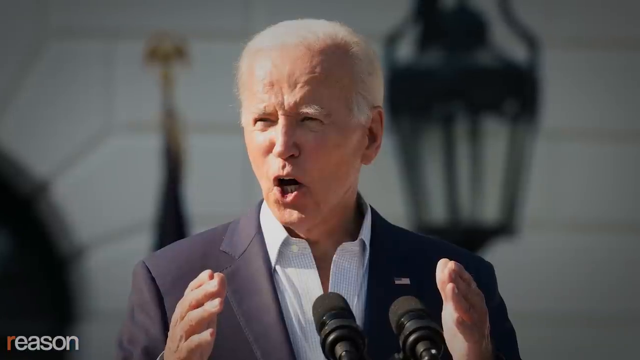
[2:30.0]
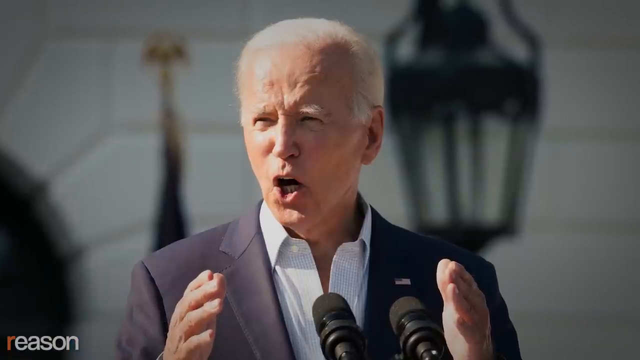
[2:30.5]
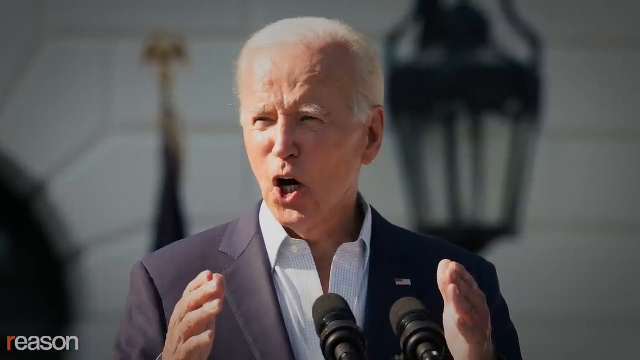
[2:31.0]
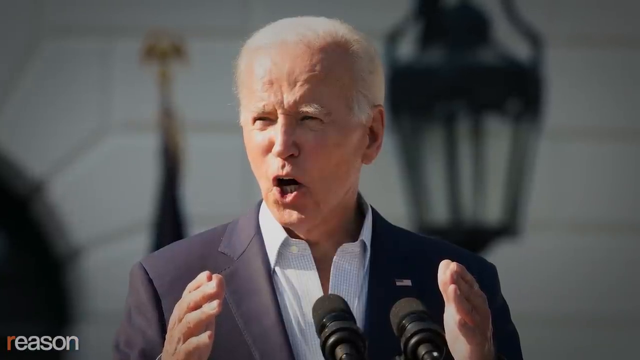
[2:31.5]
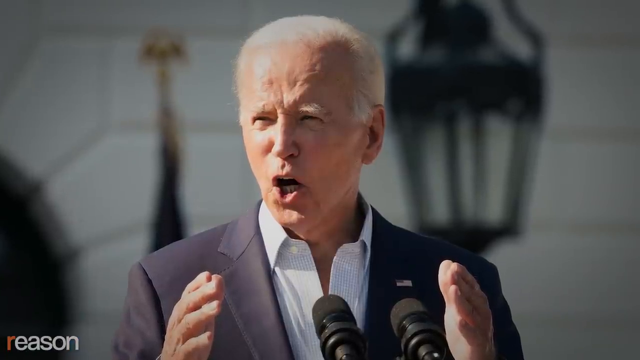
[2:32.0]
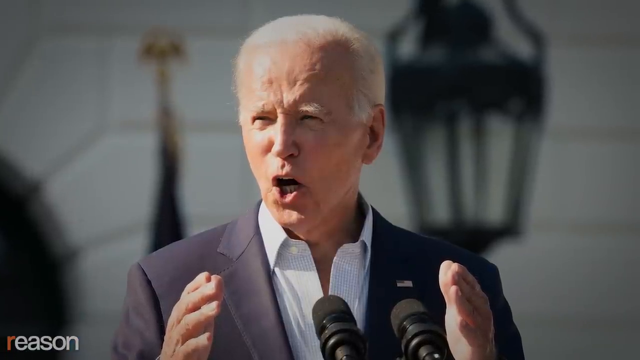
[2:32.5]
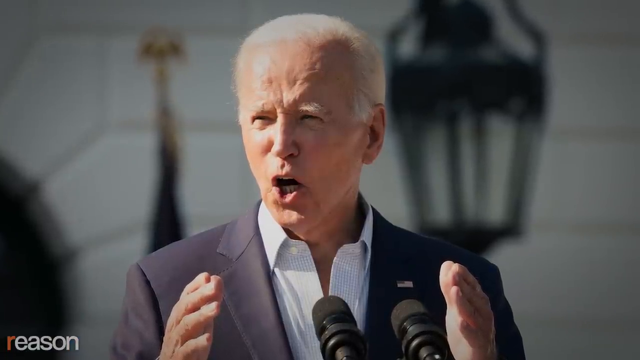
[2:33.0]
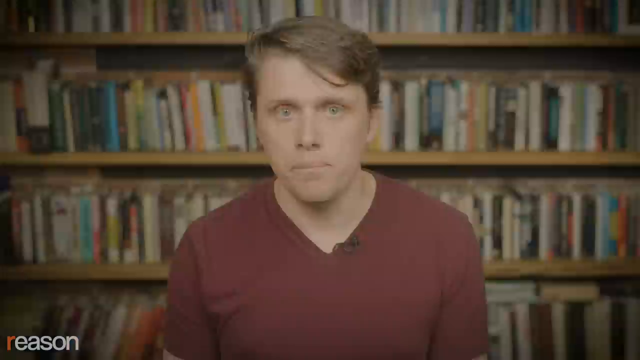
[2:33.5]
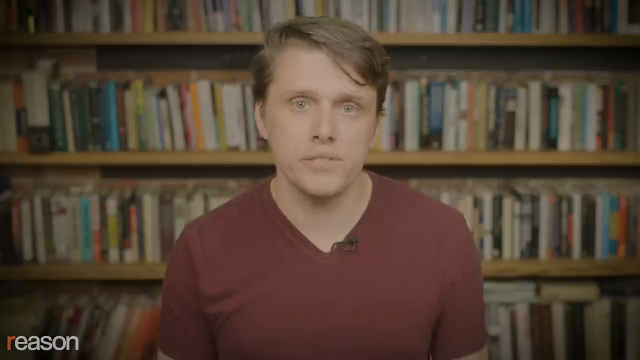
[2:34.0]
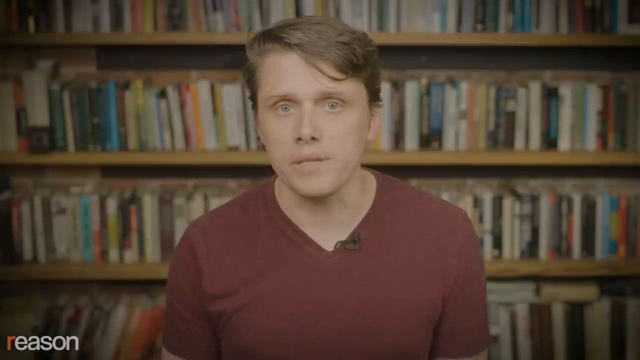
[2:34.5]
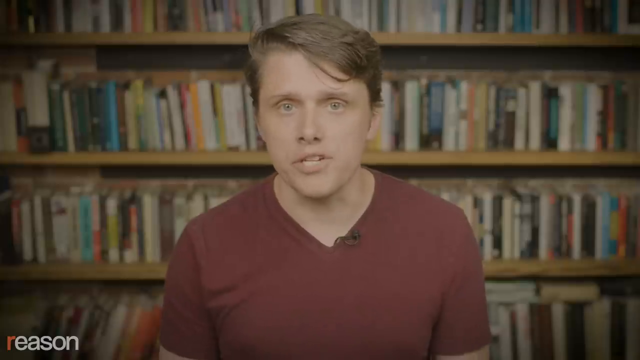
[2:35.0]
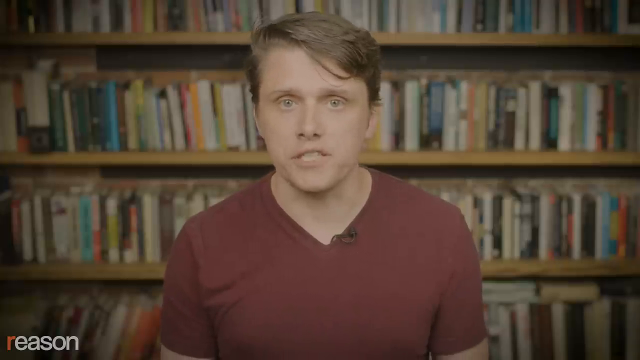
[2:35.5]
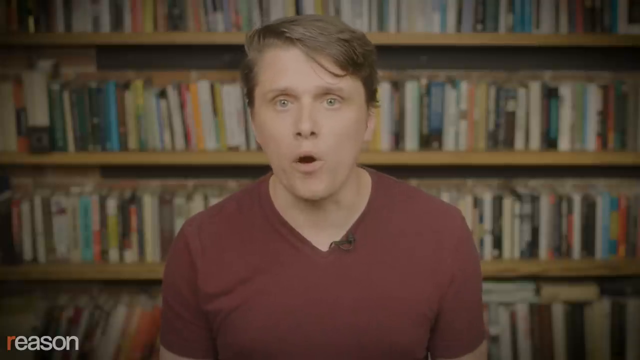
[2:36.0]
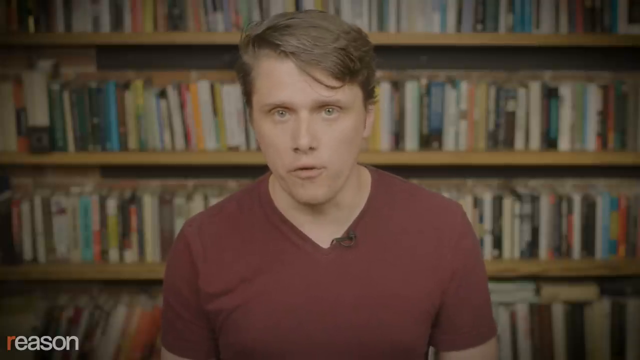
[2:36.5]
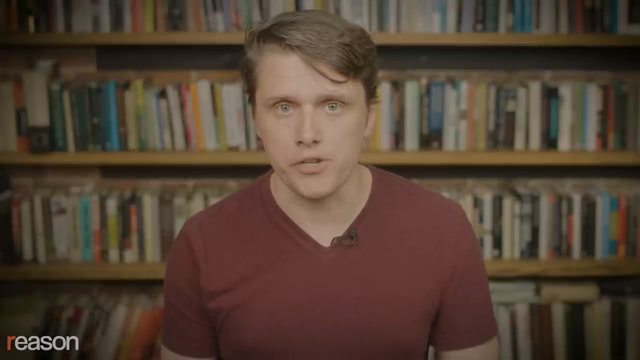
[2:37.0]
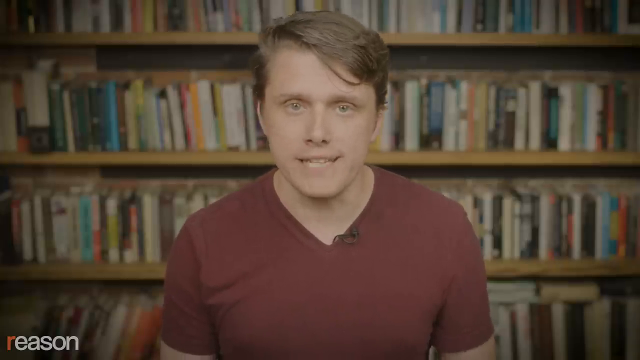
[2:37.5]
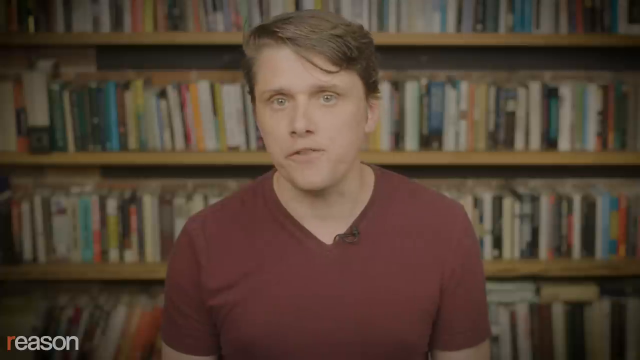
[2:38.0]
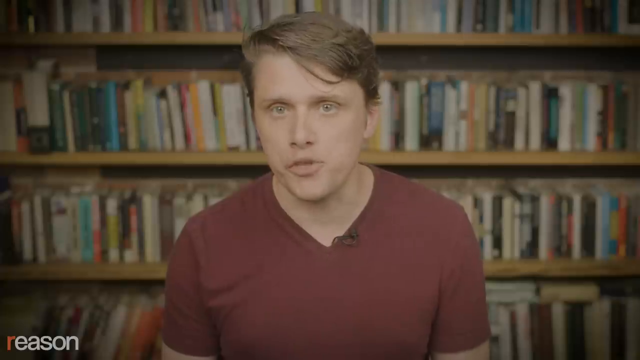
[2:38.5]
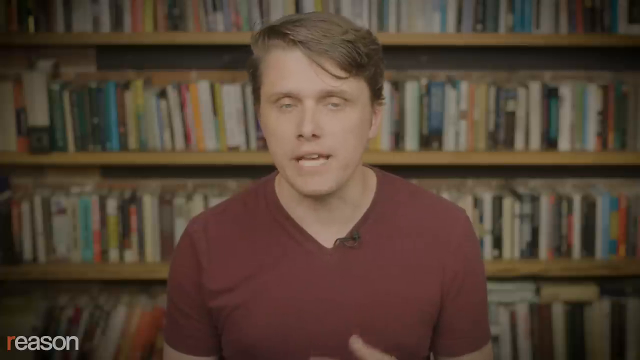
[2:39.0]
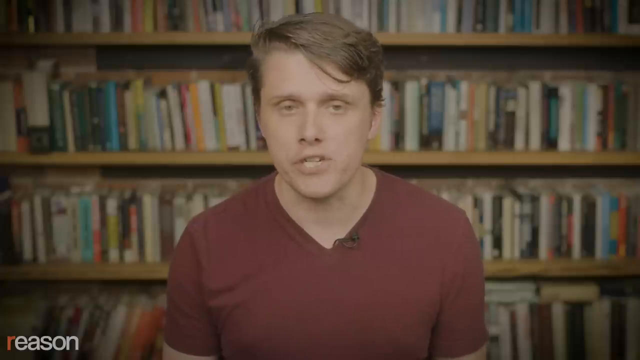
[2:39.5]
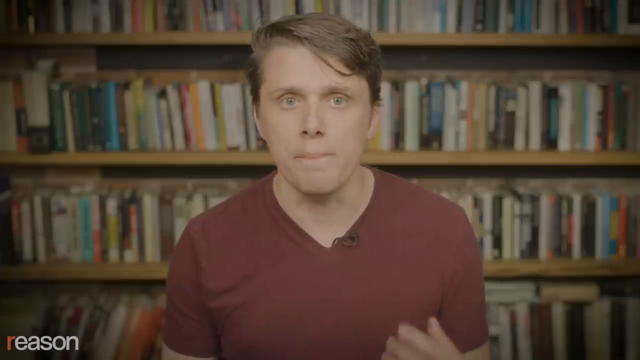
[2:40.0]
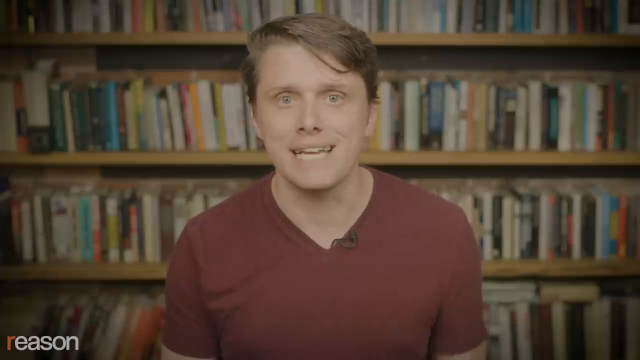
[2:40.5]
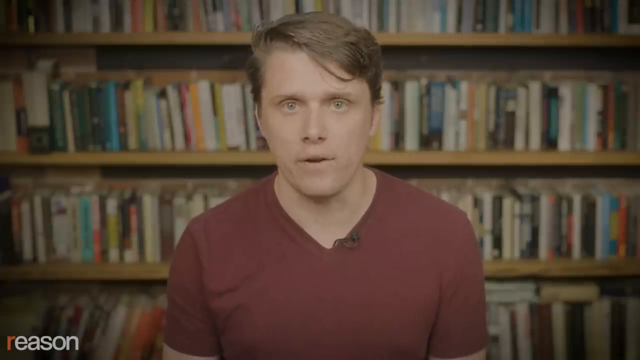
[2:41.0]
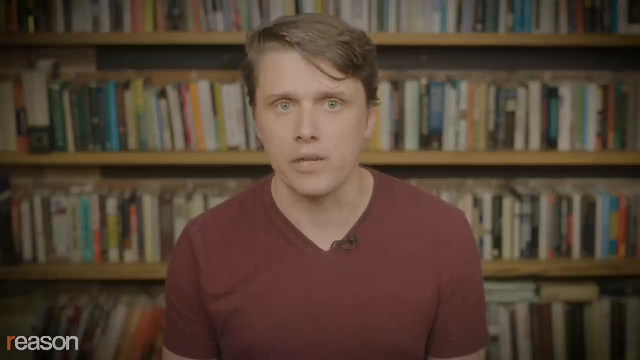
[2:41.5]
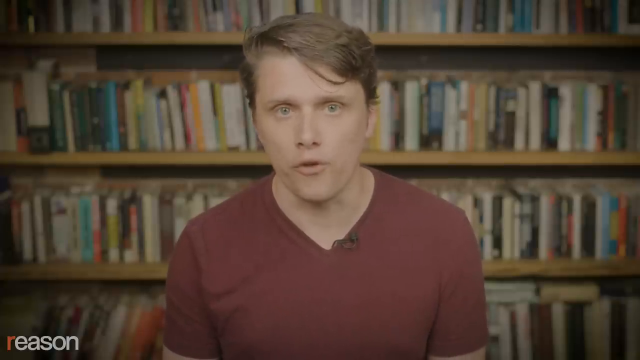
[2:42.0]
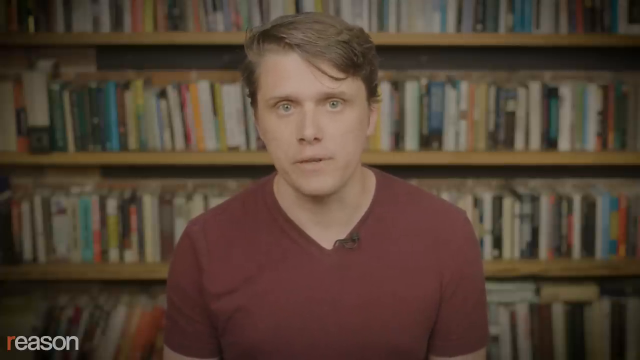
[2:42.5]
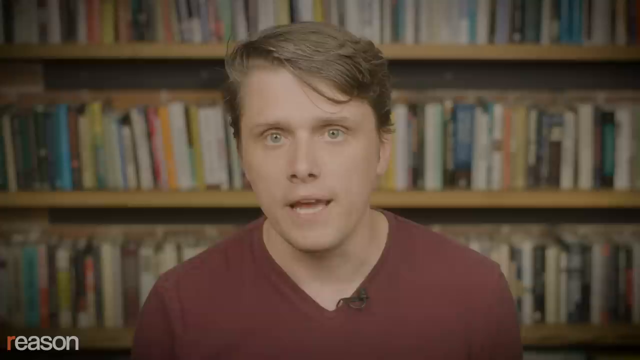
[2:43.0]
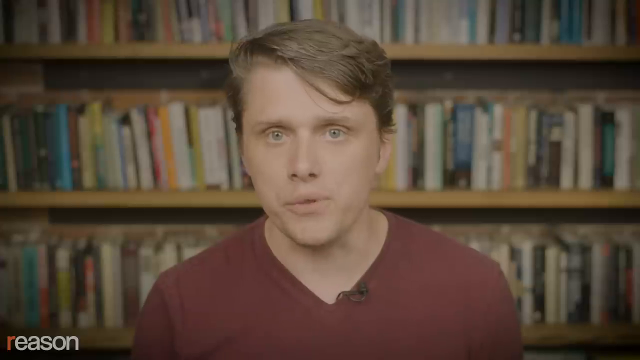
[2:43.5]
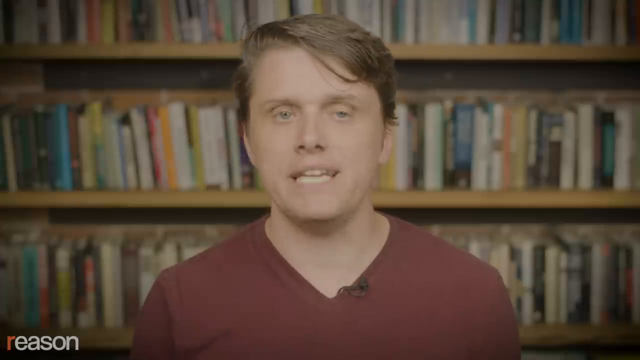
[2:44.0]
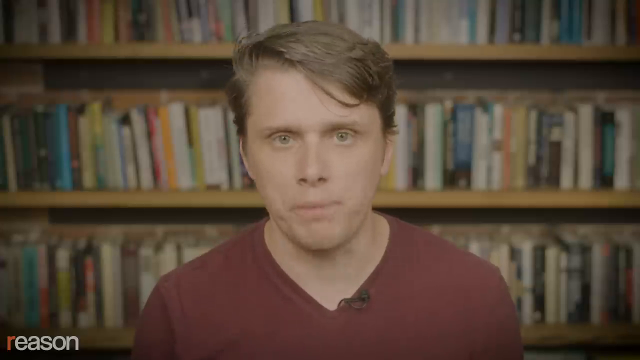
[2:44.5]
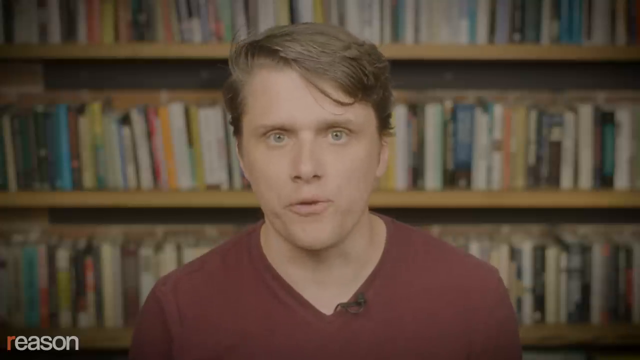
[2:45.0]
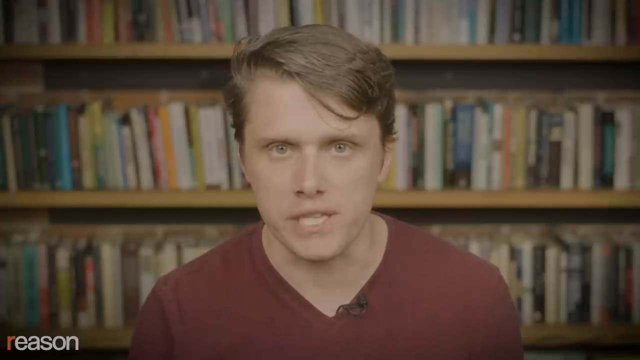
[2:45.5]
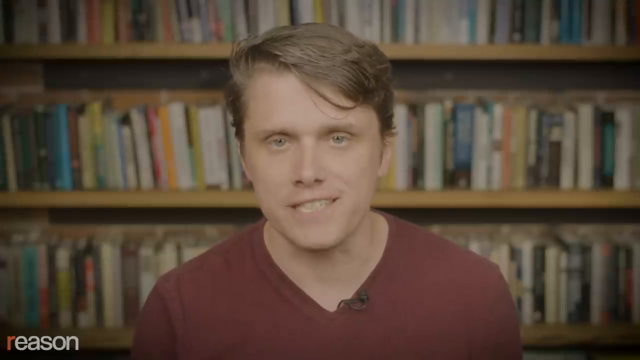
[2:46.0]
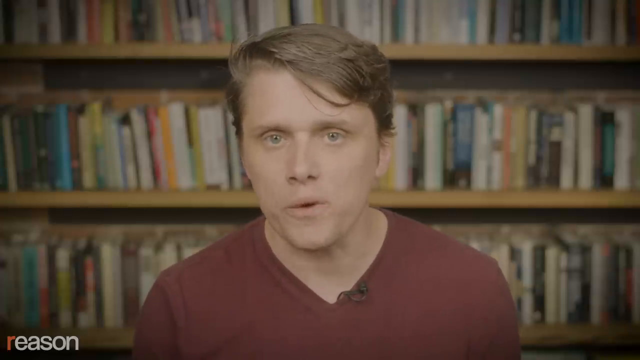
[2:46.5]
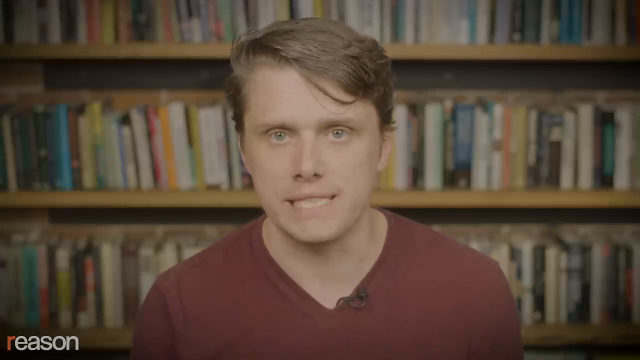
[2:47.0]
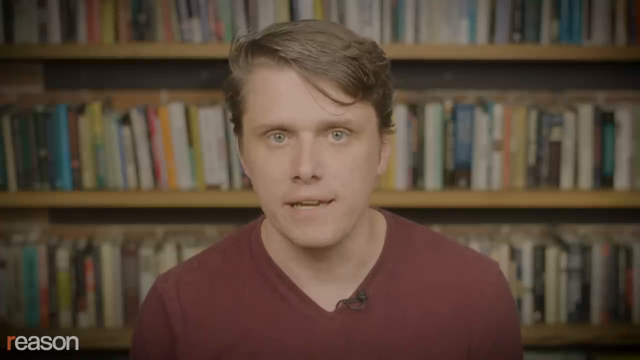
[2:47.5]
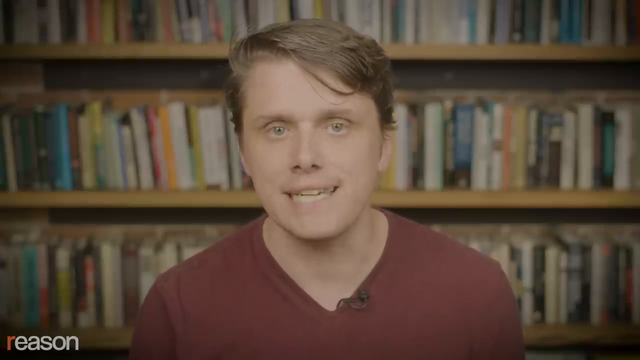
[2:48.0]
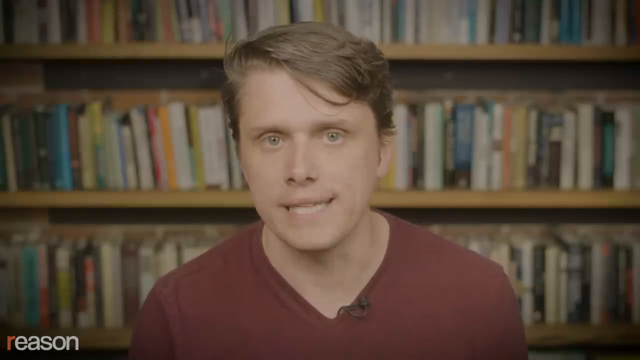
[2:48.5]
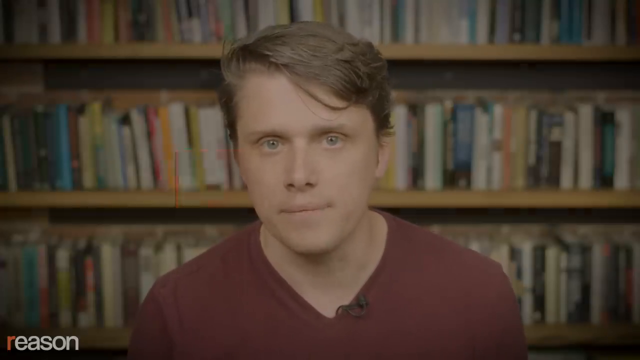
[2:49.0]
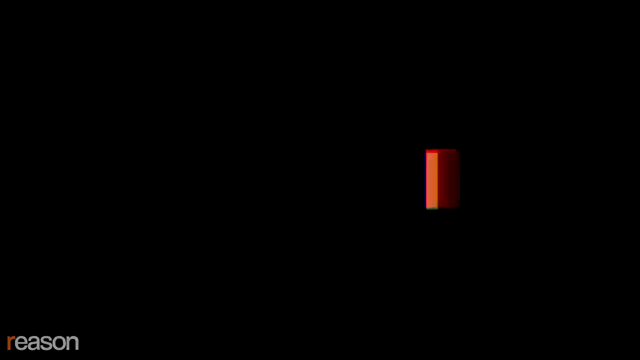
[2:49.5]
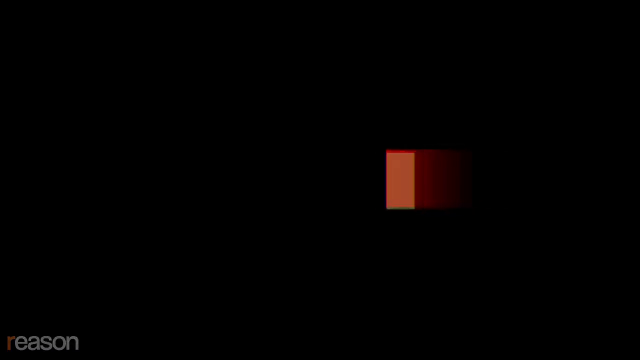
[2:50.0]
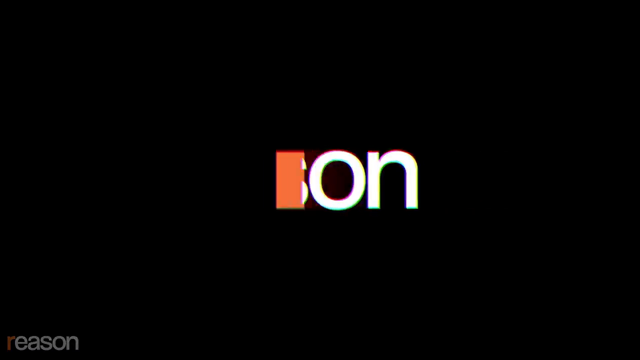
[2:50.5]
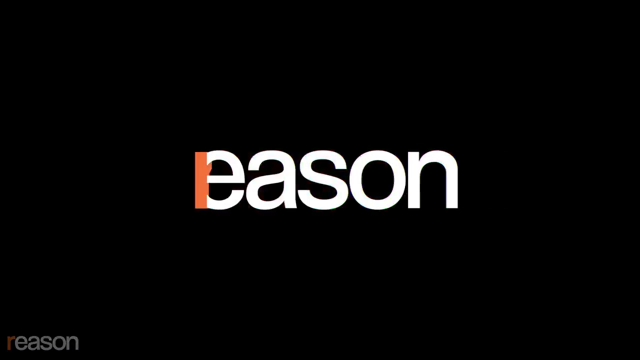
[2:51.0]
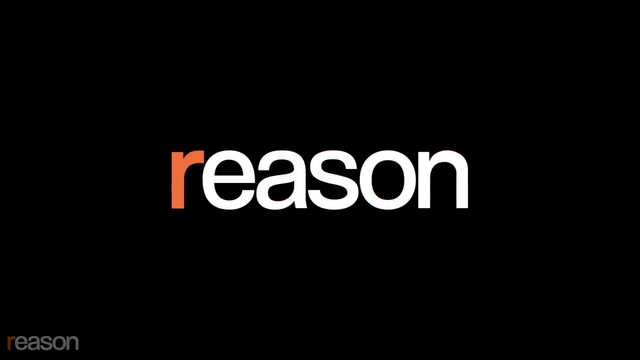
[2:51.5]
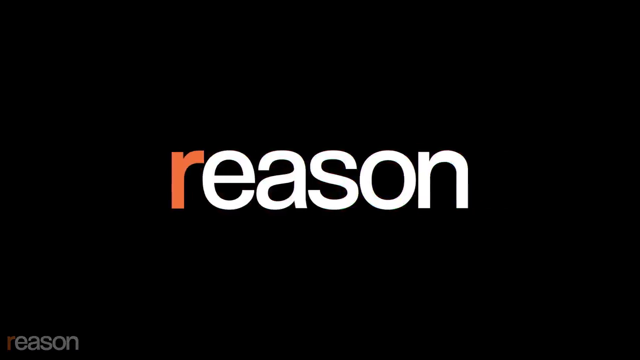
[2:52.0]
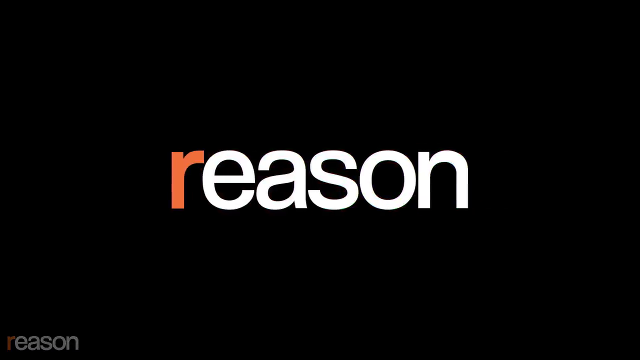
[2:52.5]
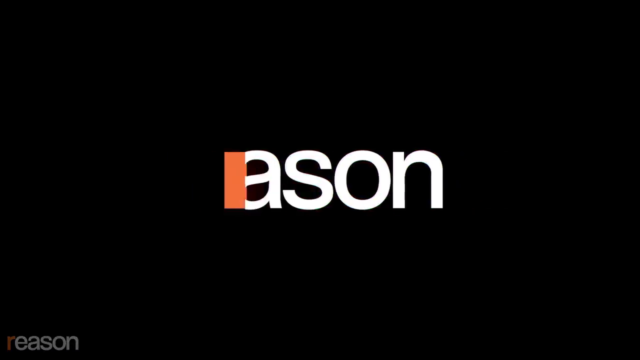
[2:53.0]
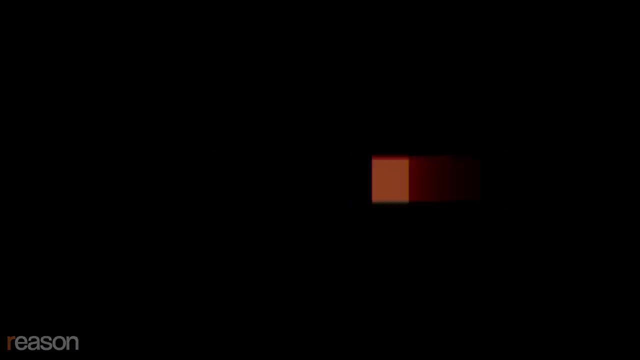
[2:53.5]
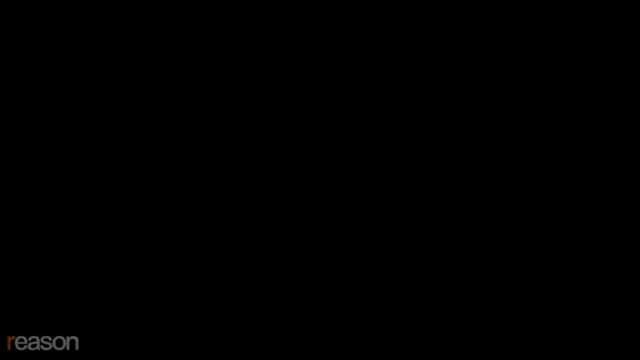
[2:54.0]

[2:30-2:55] After a little green screen, Eric appears in the same area with the books, wearing a maroon T-shirt. He seems calm and neutral as he talks for a few seconds. Shortly after, the word "Reason" appears on a black screen, going across it.